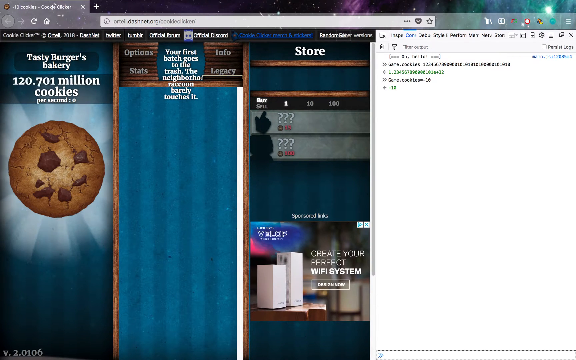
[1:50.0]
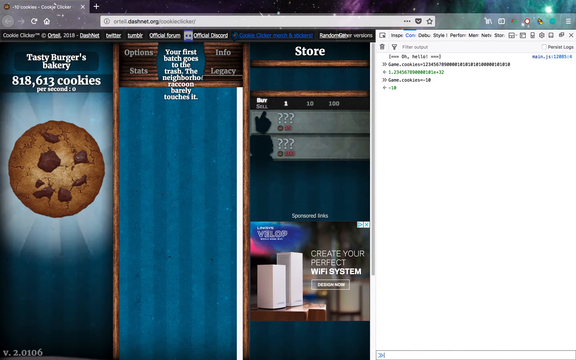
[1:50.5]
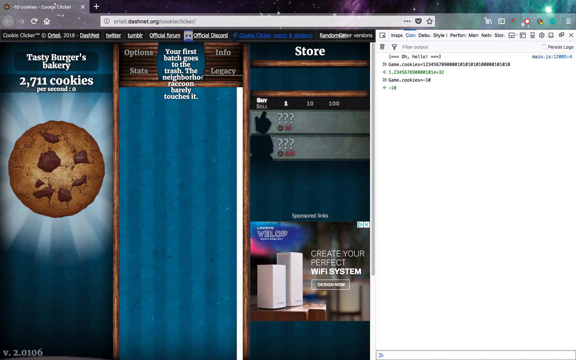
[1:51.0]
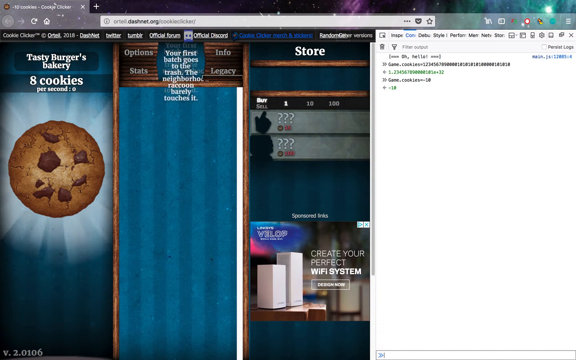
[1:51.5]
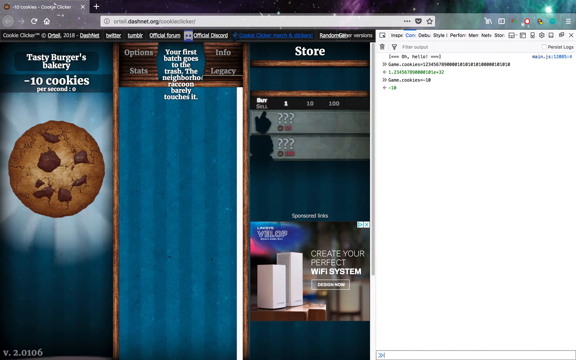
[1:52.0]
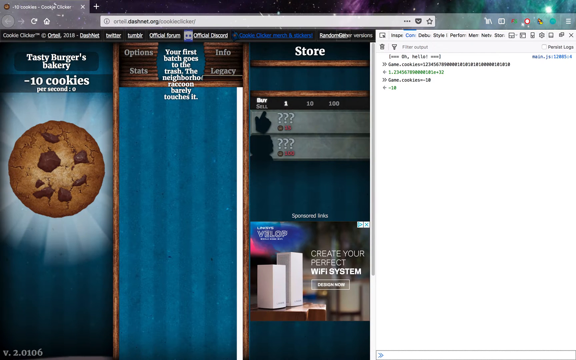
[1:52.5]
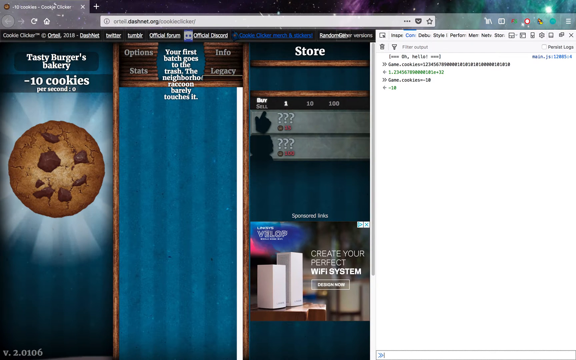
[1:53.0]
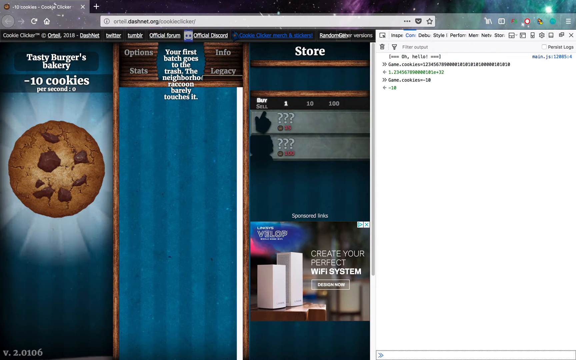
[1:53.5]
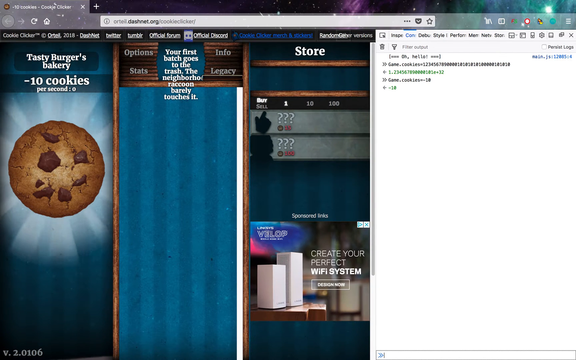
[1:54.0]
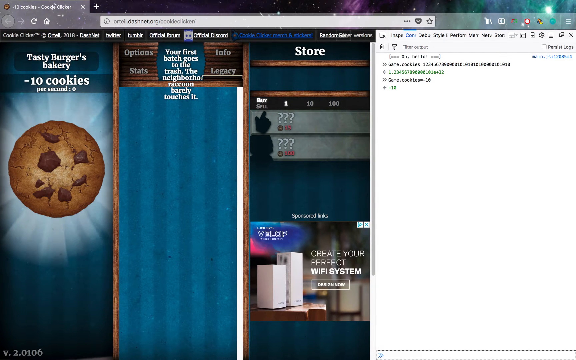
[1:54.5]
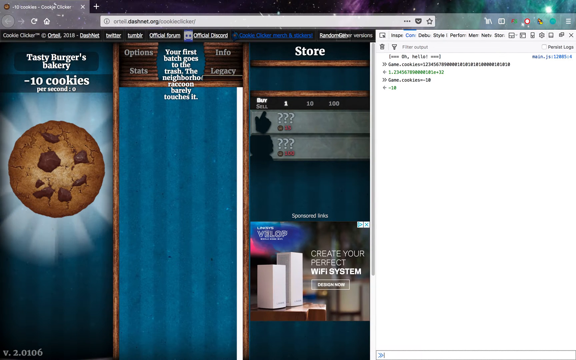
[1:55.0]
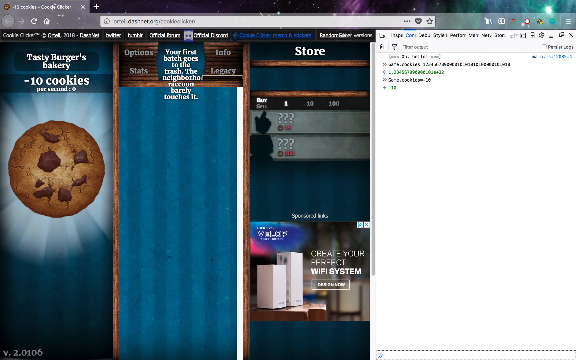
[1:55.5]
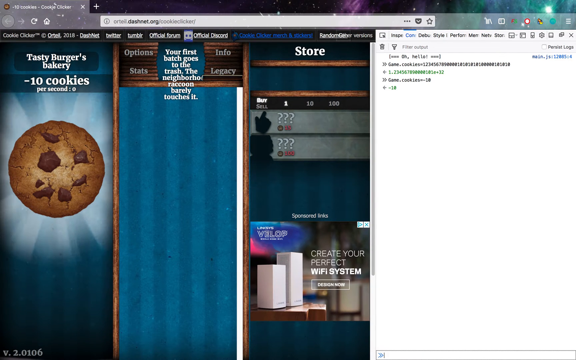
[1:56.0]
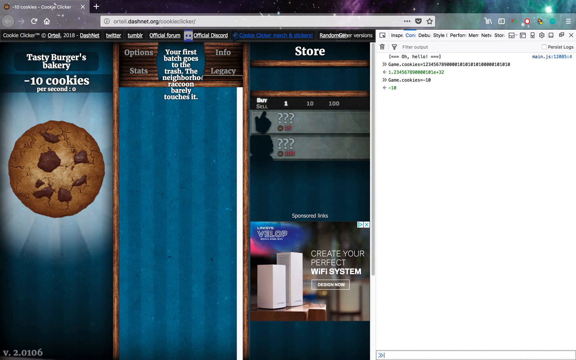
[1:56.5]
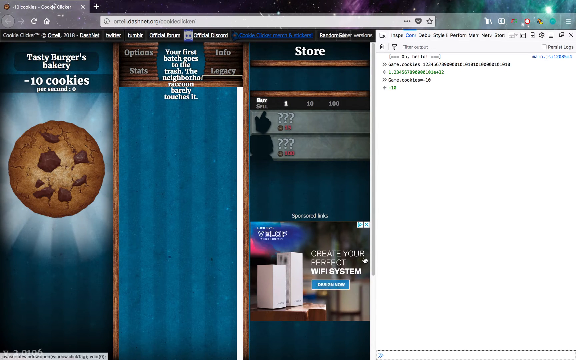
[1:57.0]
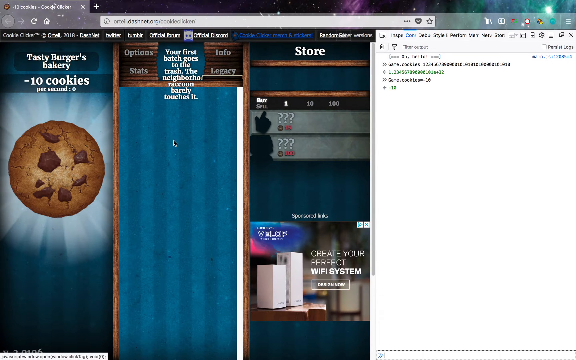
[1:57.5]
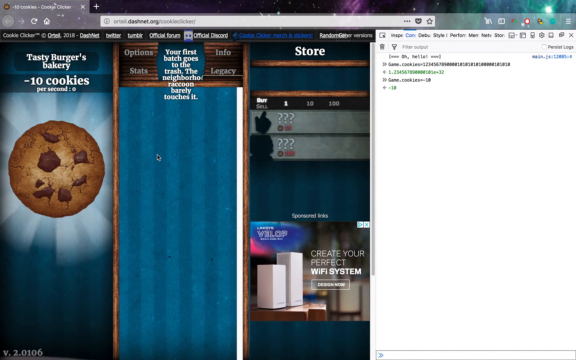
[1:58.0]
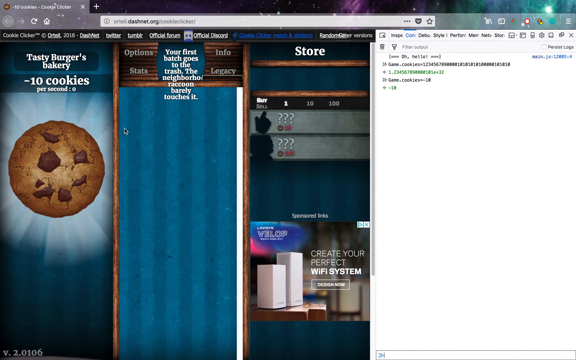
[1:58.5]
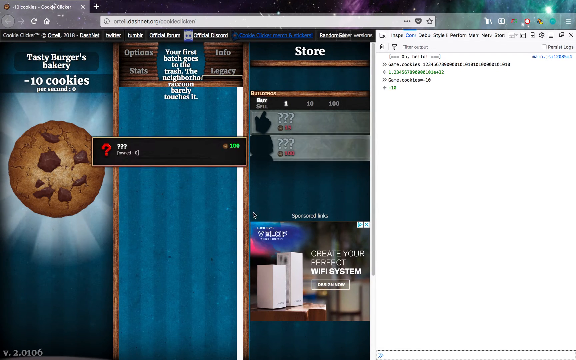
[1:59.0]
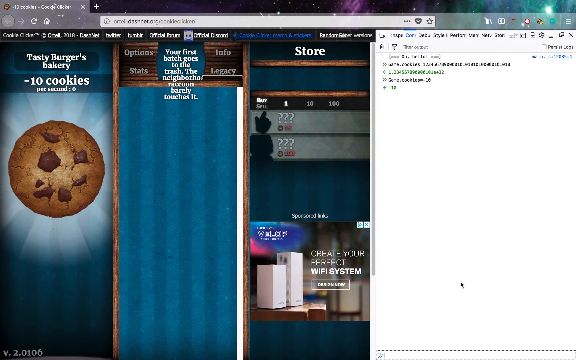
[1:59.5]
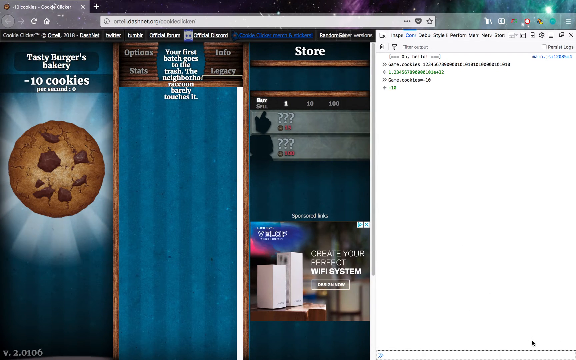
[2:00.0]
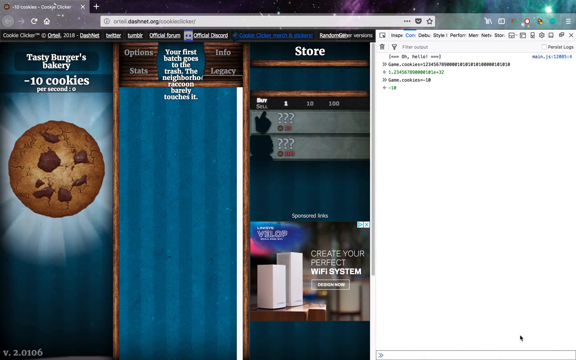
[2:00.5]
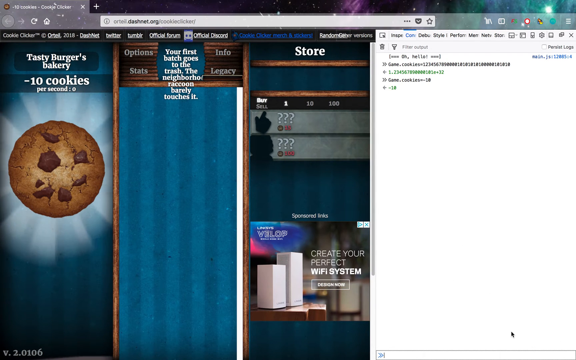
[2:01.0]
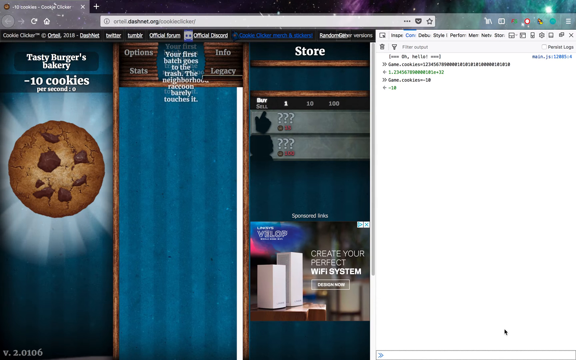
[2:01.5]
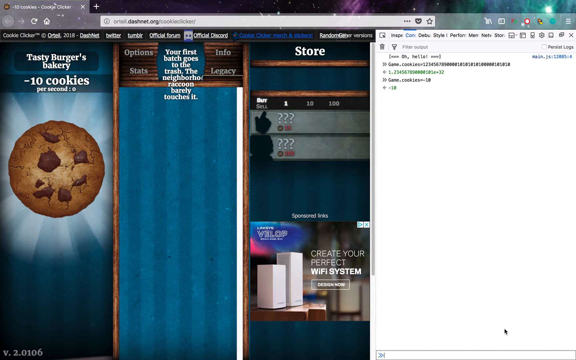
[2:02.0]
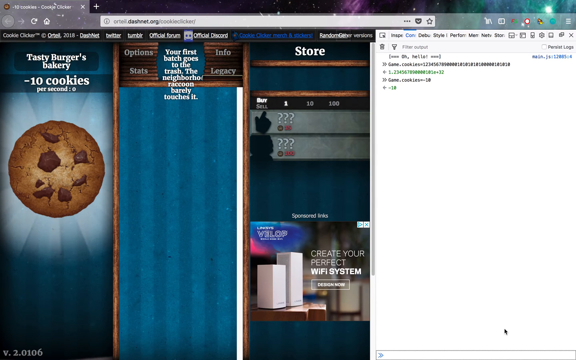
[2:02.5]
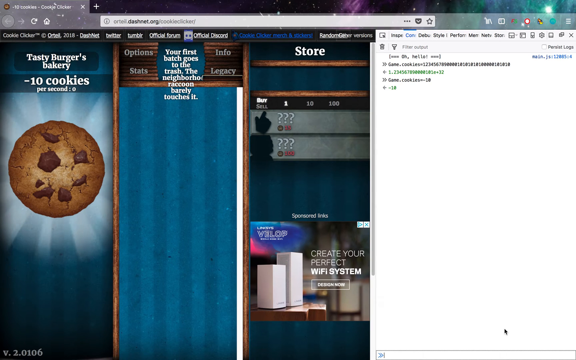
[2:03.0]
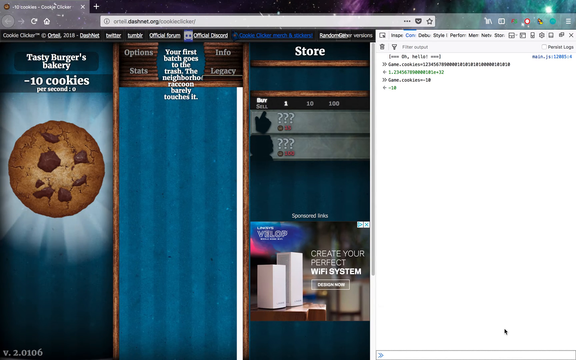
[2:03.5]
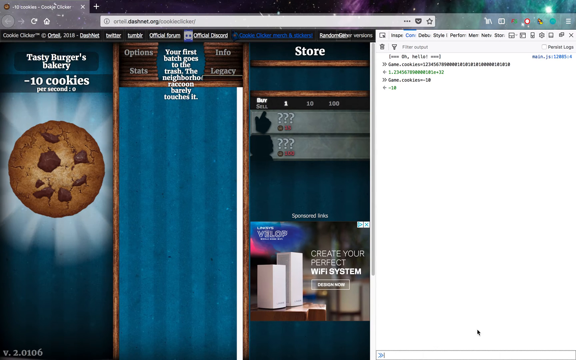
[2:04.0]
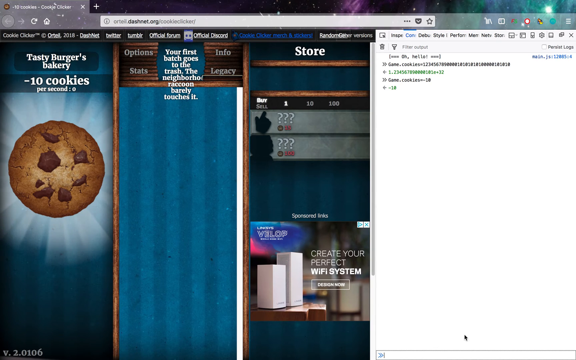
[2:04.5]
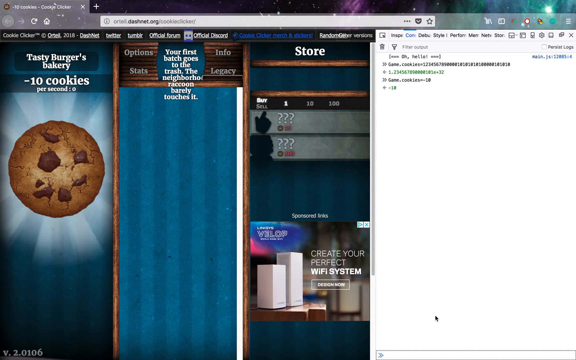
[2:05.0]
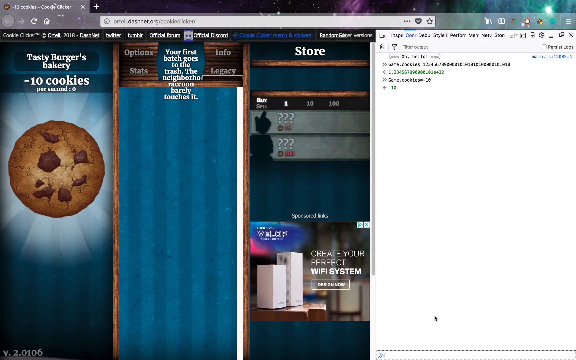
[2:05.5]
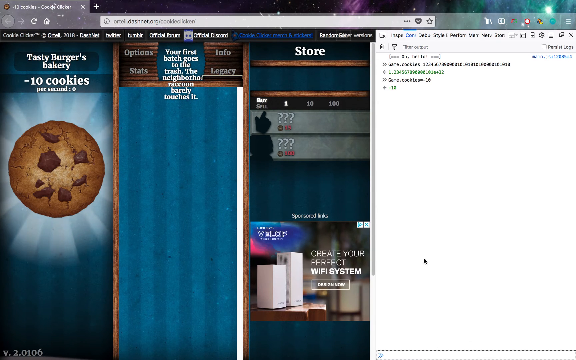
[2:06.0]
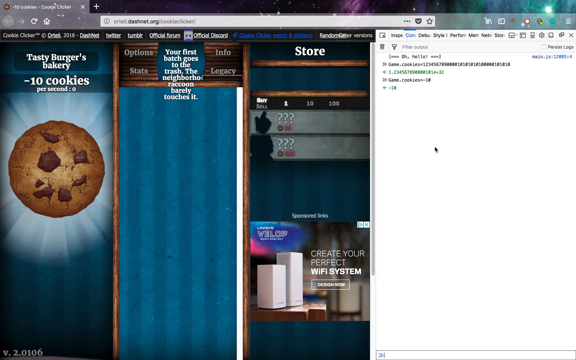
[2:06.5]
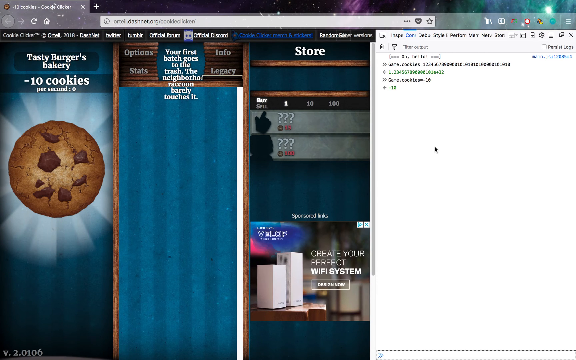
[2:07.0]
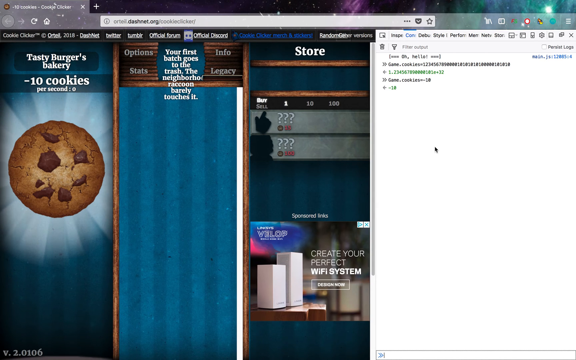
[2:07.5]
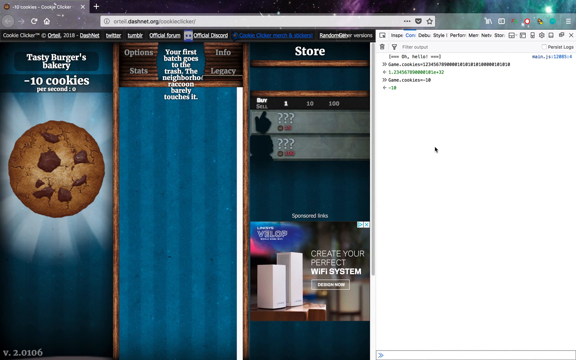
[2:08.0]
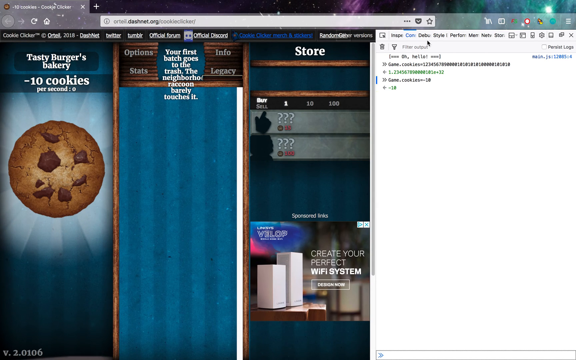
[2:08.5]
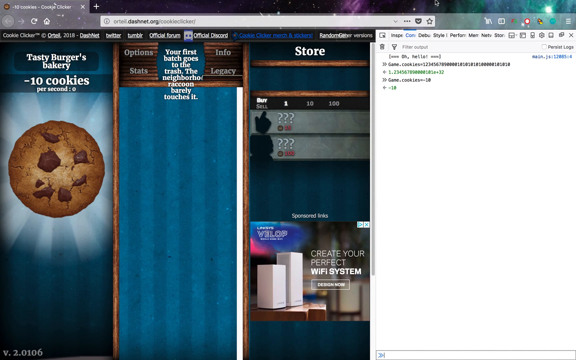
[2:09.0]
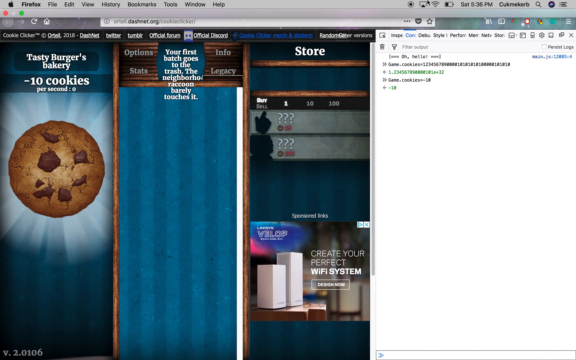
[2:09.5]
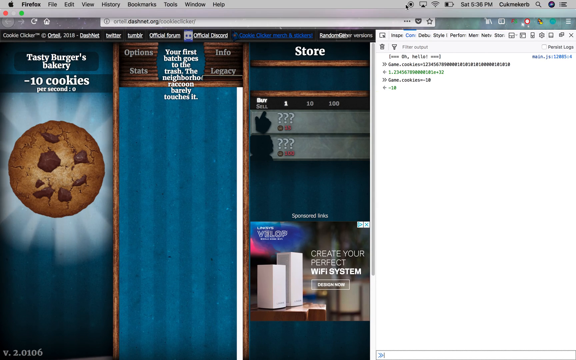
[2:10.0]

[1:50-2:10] On dashnet.org/cookie clicker, he is back in the inspect element code, moving his cursor around the website. Nothing is typed in the inspect element search bar and nothing happens on the website. He goes back up to the taskbar and switches between full screen mode and not full screen.